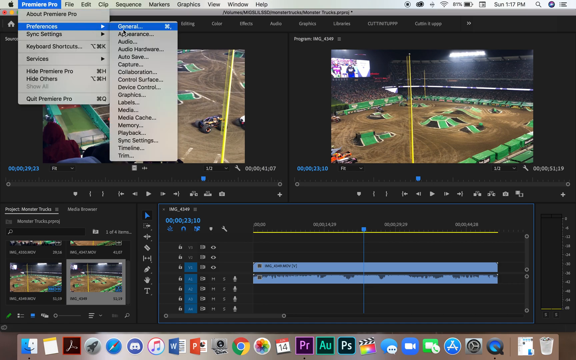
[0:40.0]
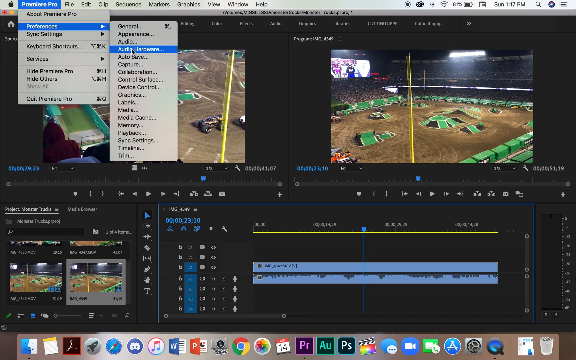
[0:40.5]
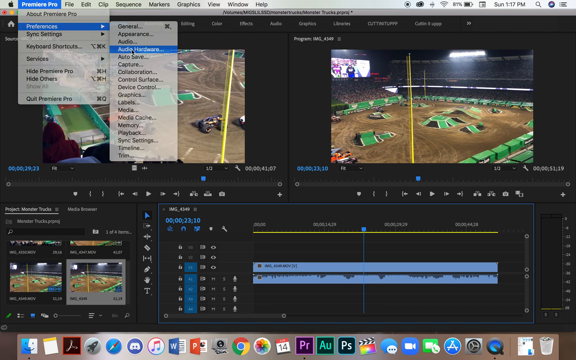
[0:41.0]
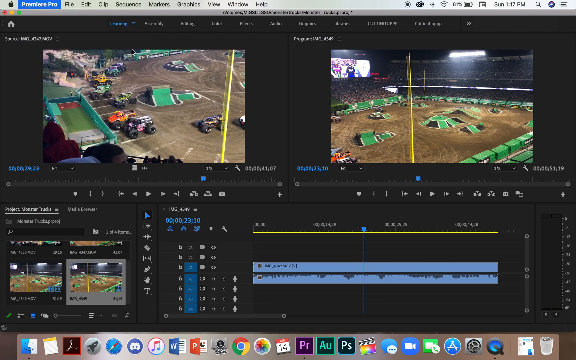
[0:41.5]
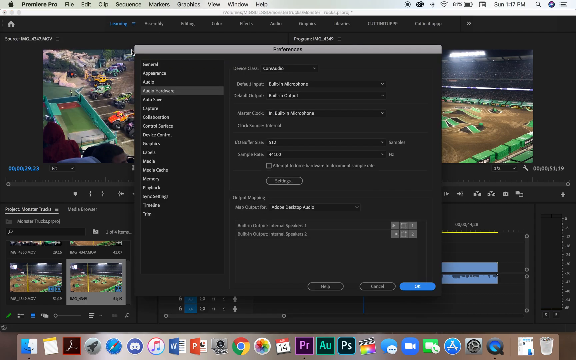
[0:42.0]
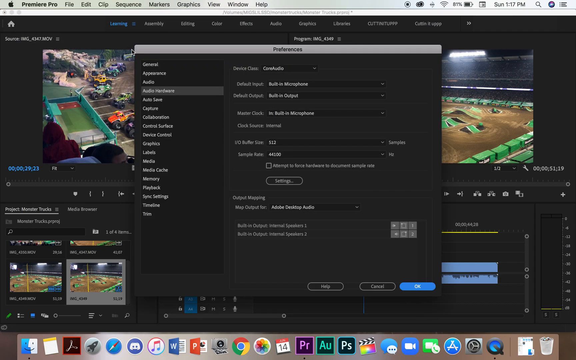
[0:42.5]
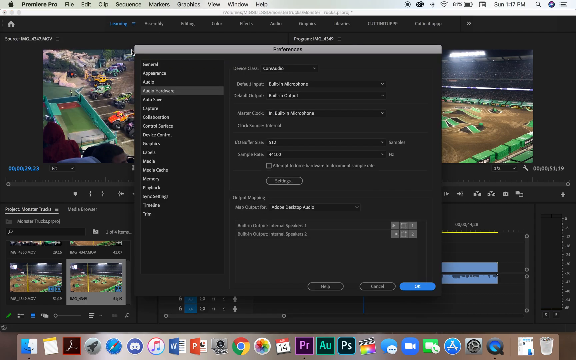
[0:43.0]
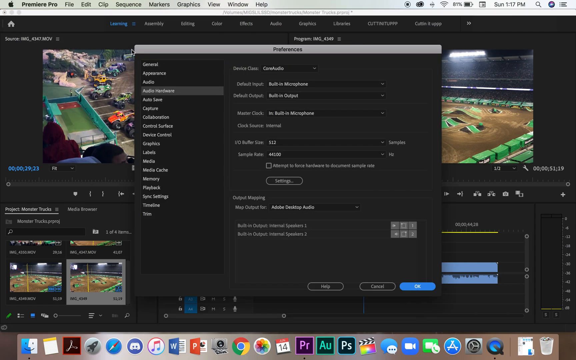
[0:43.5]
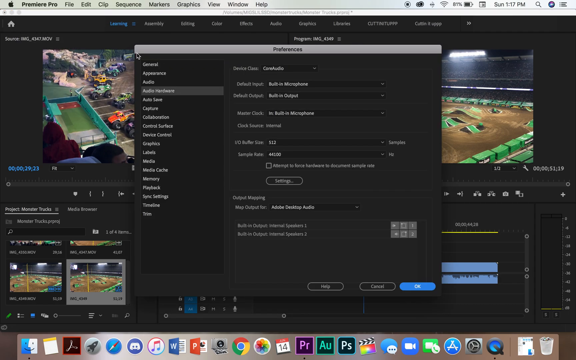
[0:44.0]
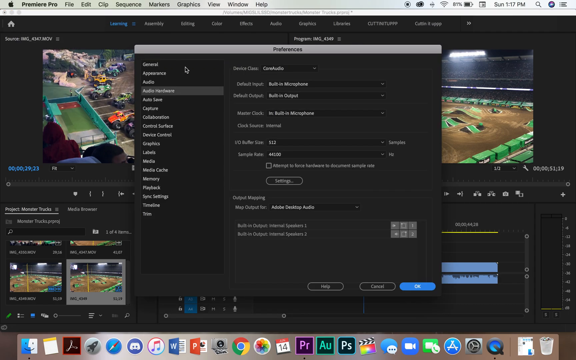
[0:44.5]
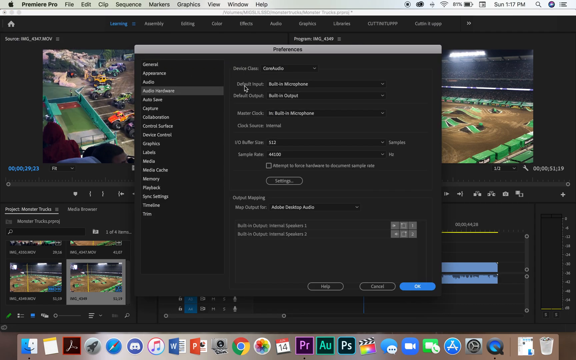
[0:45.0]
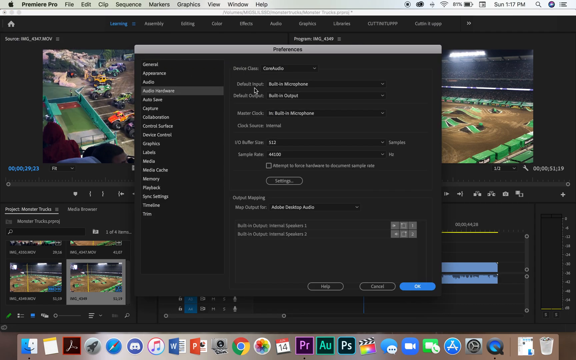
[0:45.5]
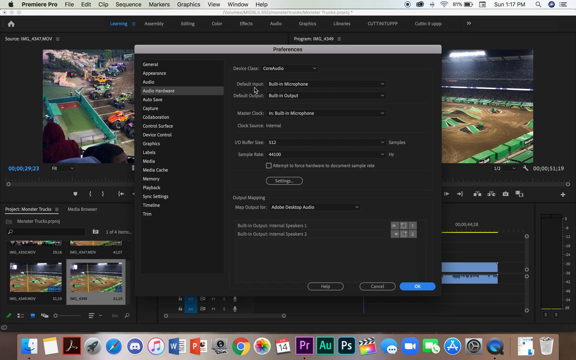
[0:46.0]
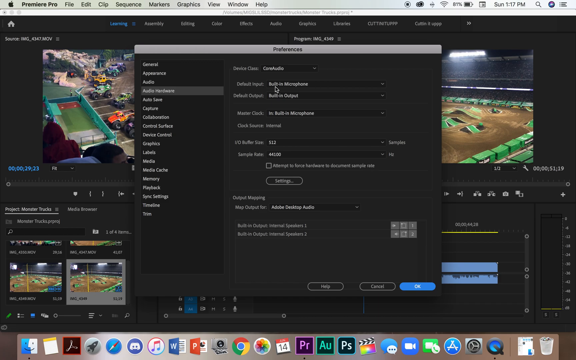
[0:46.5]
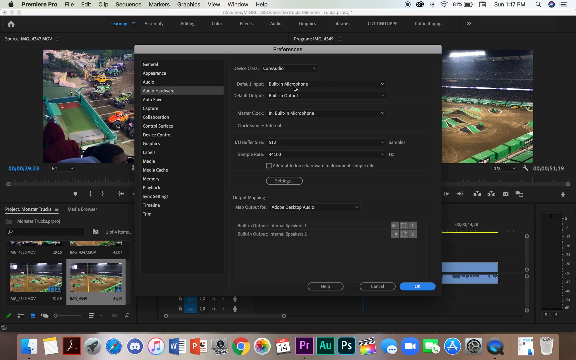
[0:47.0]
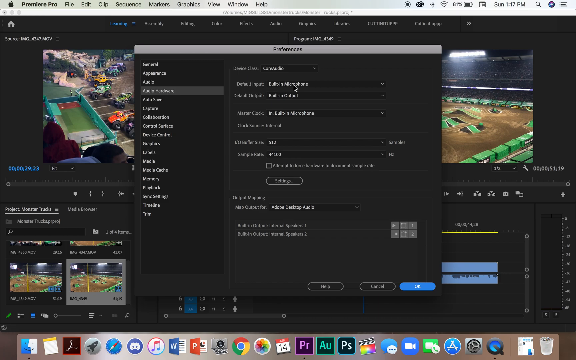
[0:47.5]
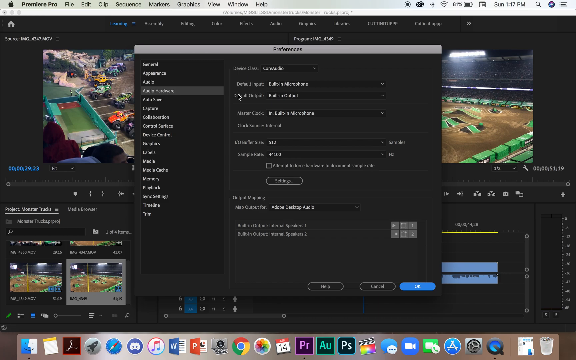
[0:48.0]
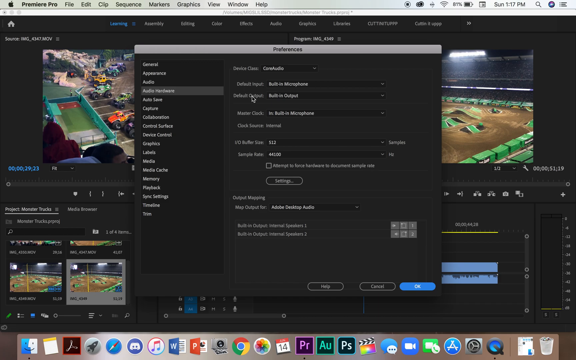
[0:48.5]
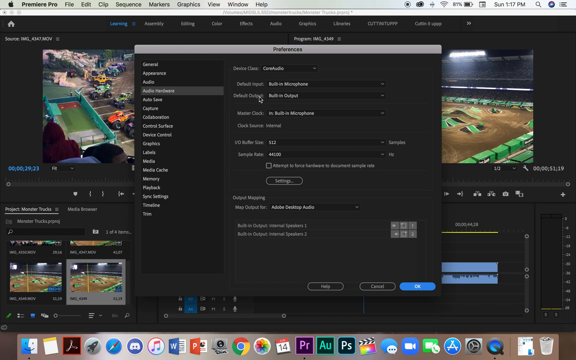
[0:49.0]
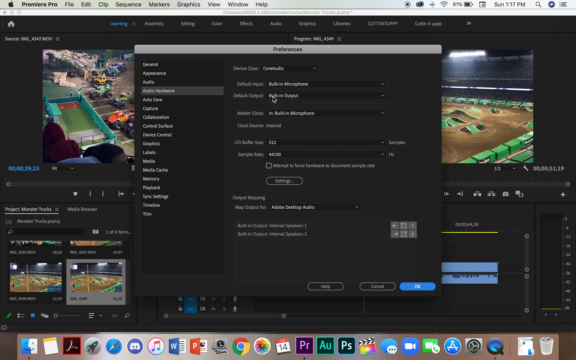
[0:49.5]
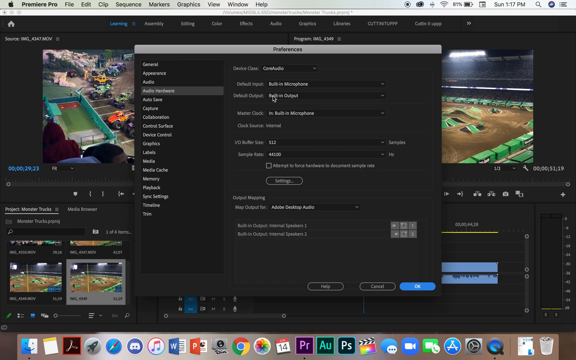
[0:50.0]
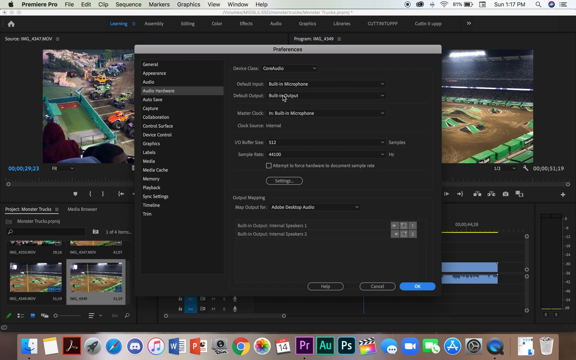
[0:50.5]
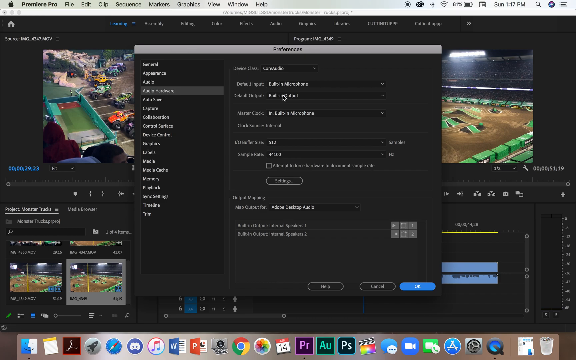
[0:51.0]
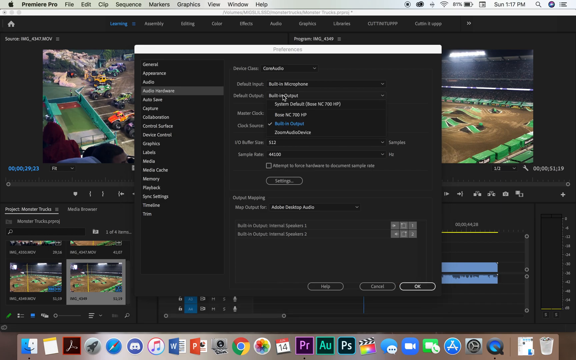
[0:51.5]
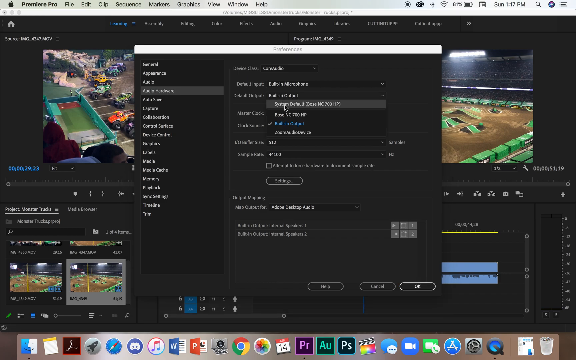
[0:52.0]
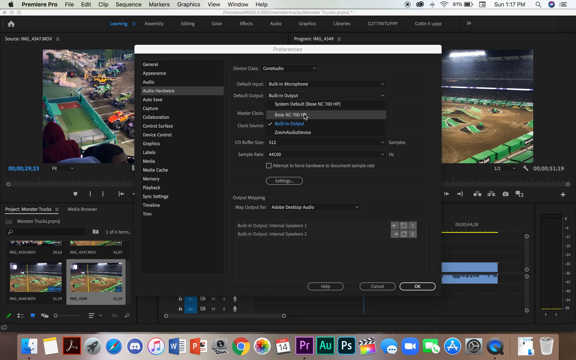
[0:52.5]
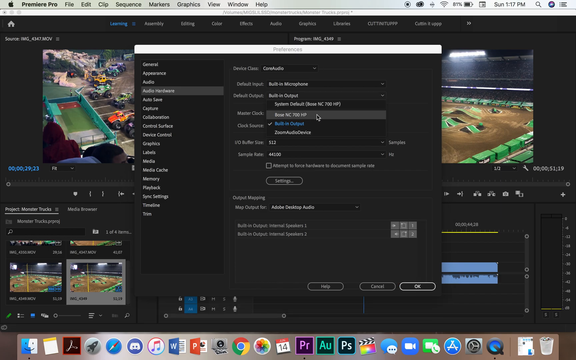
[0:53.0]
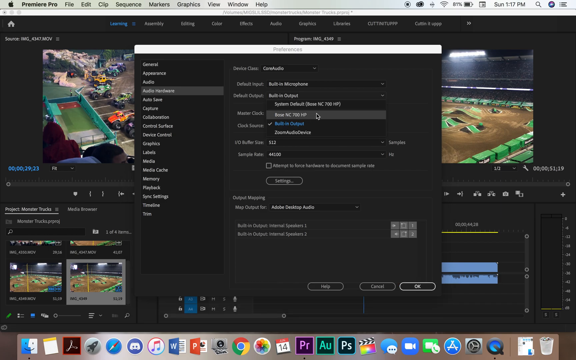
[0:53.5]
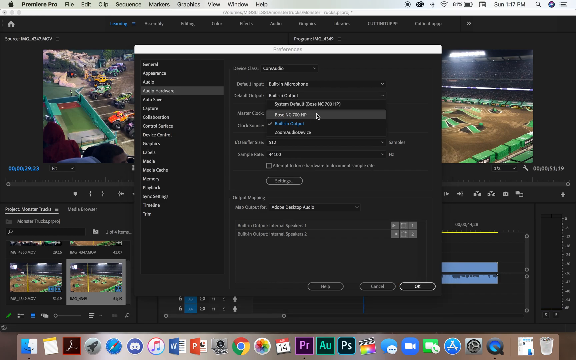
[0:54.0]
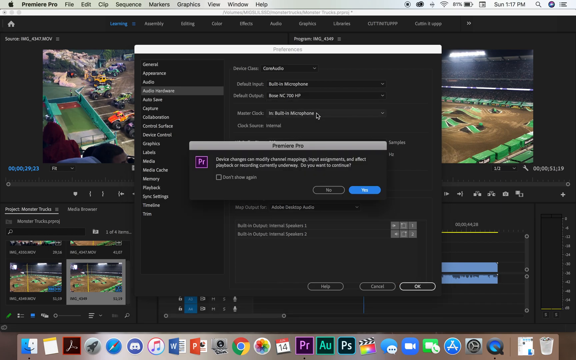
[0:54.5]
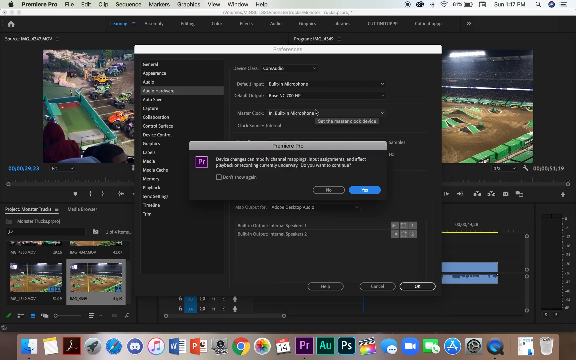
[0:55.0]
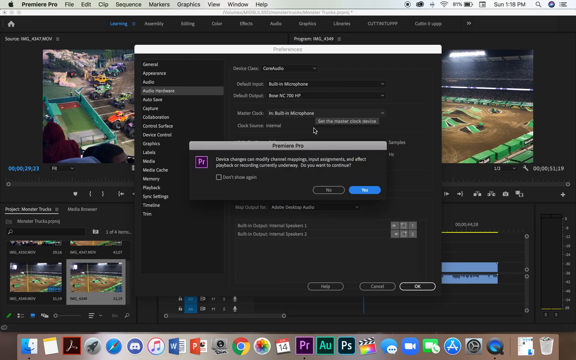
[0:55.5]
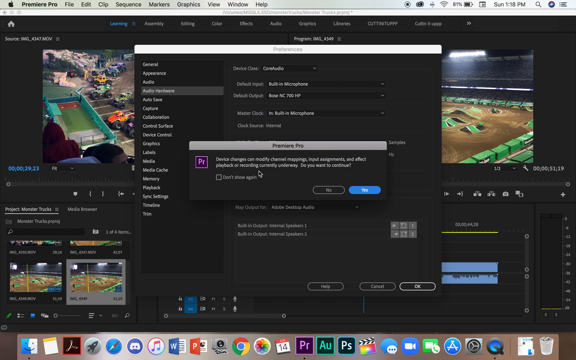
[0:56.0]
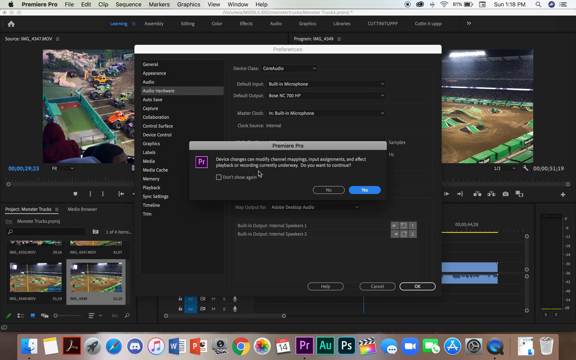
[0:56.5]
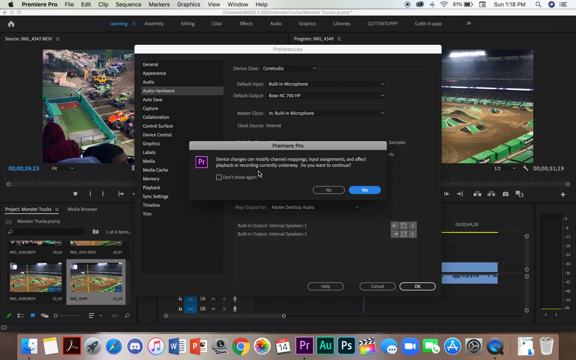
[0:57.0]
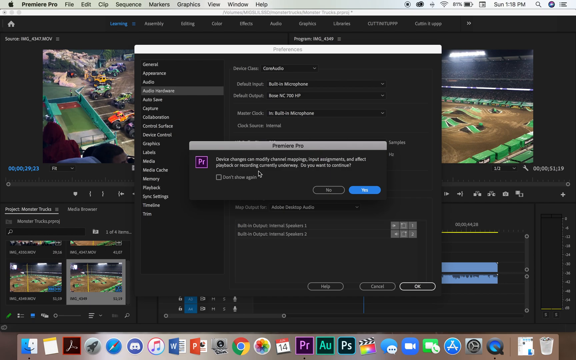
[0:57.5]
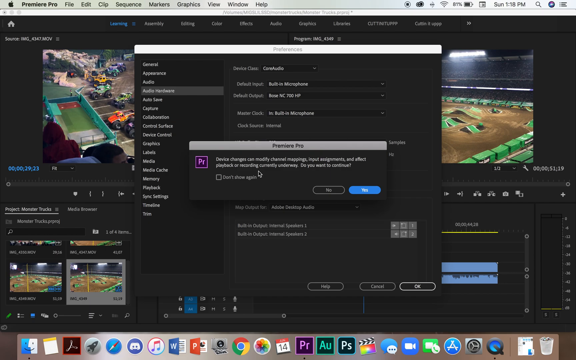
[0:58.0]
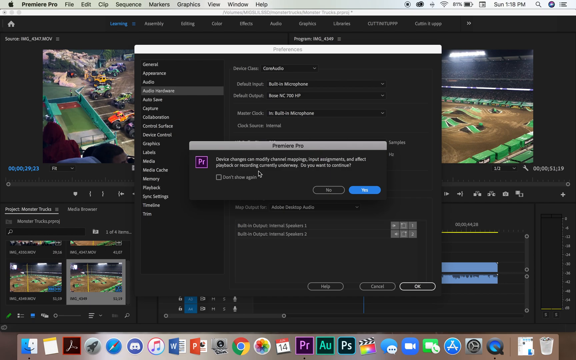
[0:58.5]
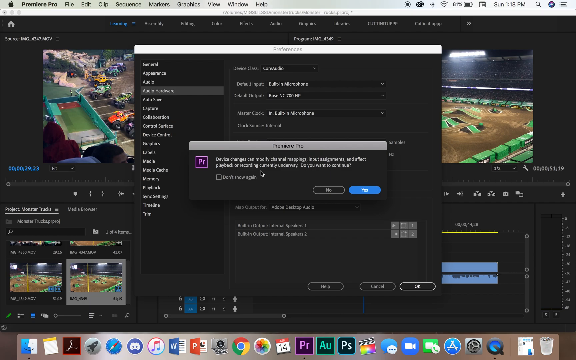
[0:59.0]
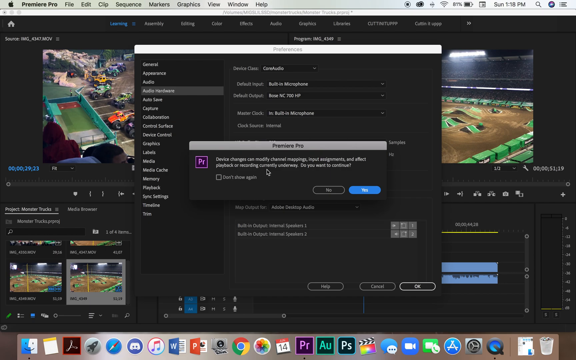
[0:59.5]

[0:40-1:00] The vehicles go separate ways, some from the right and some from the left, but they all rotate around a rounded course. A Premiere Pro menu lists Hide Premiere Pro, Hide Others, Audio, Save, Capture, Collaboration, Control Surface, Labels, Media, Memory, Playback, and Sync Settings. At the top are the Premiere Pro, File, Edit, Clip, Sequence, Graphic, View, Window, and Help menus, and the battery at the top of the desktop shows 87%. On the left-hand side the video game is not playing; only the video on the right-hand side shows motion.